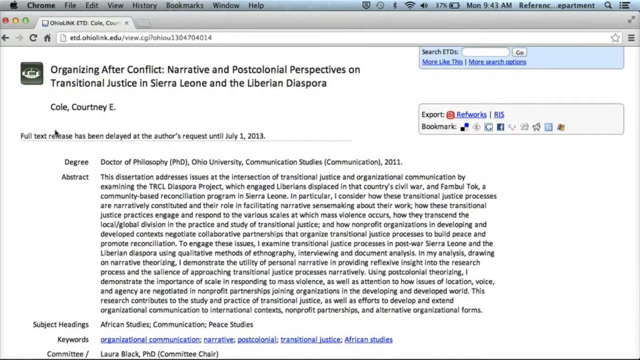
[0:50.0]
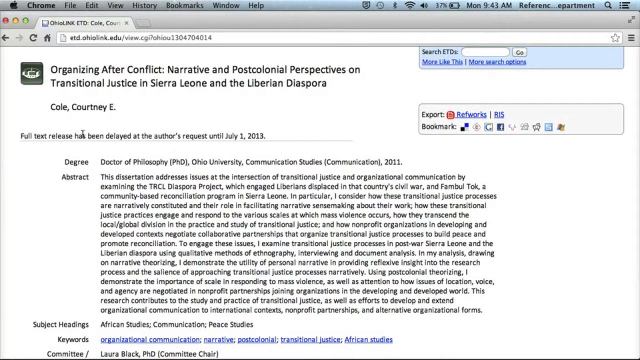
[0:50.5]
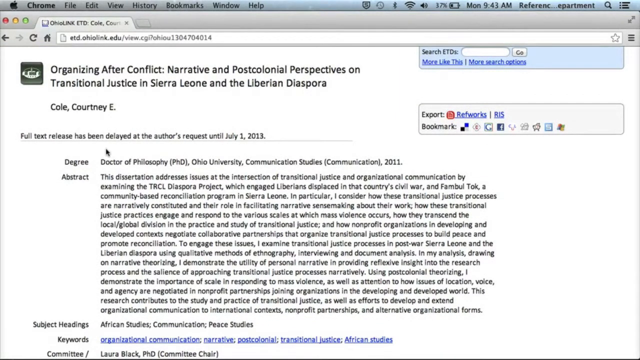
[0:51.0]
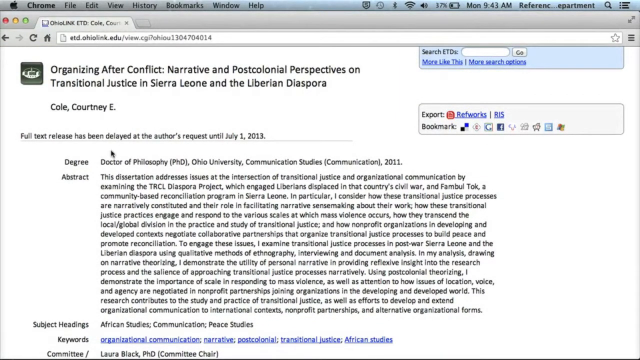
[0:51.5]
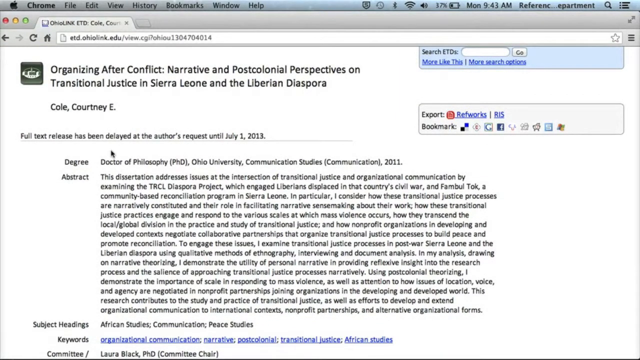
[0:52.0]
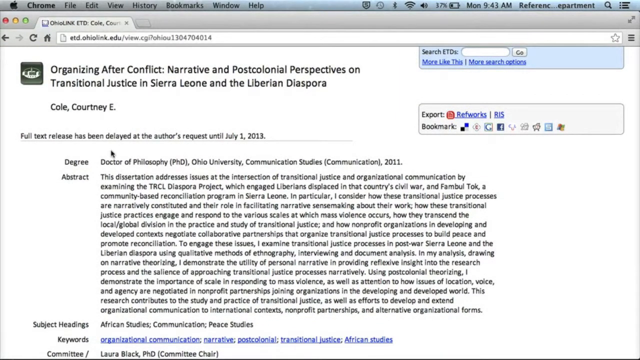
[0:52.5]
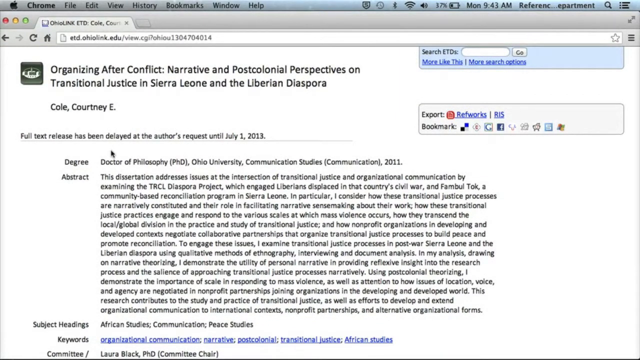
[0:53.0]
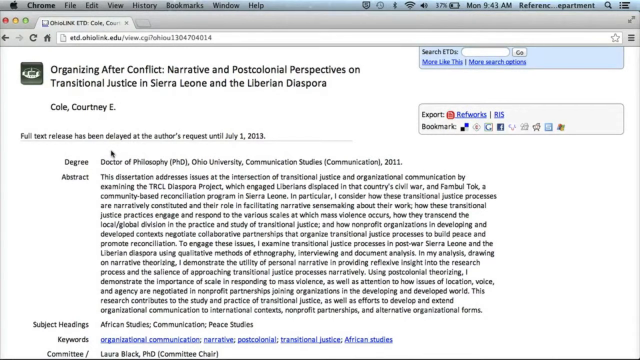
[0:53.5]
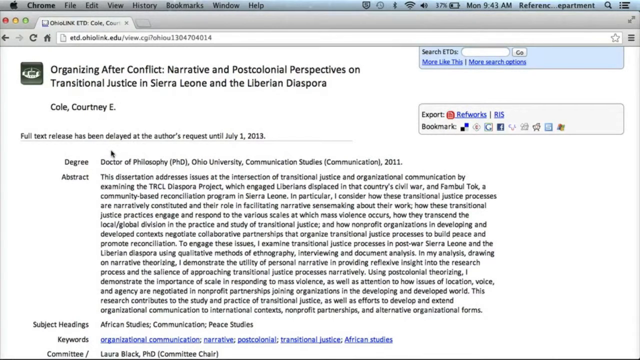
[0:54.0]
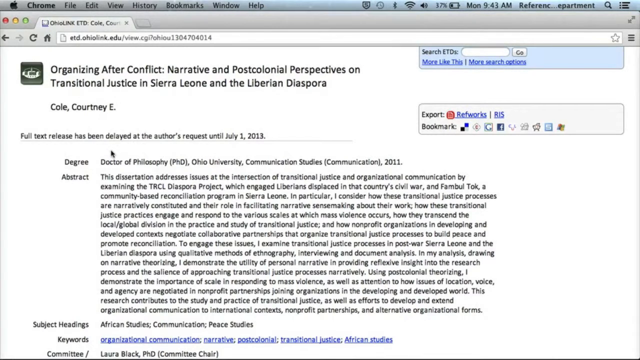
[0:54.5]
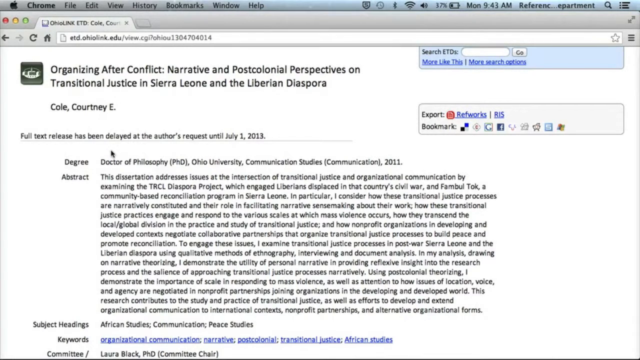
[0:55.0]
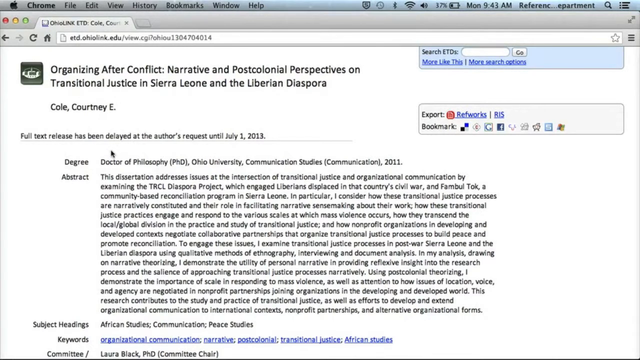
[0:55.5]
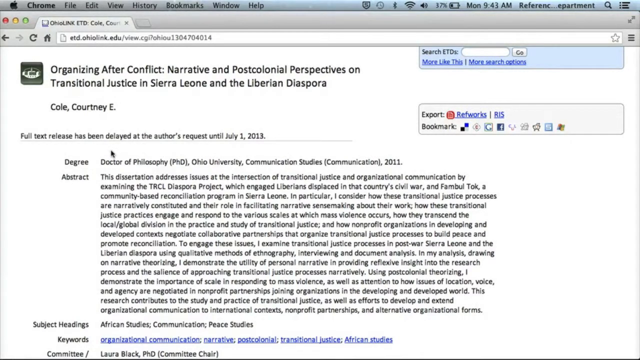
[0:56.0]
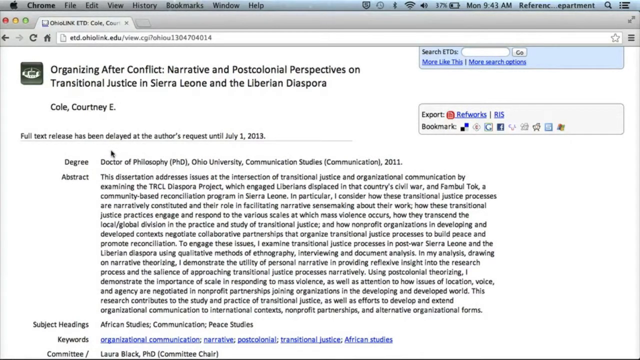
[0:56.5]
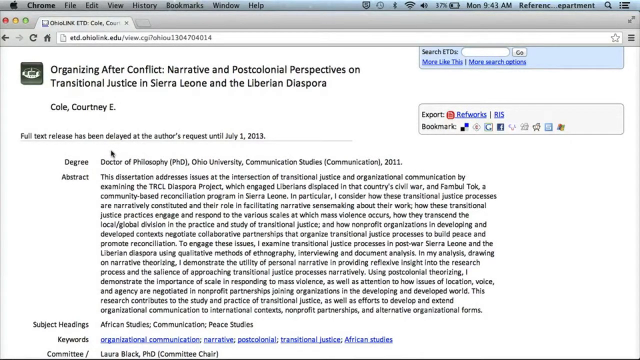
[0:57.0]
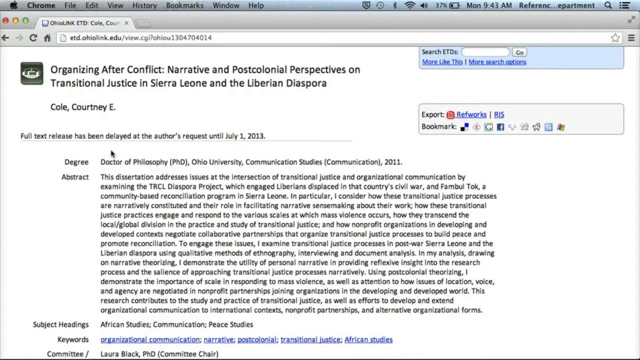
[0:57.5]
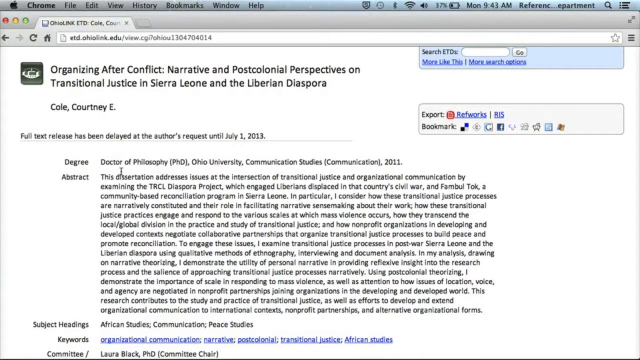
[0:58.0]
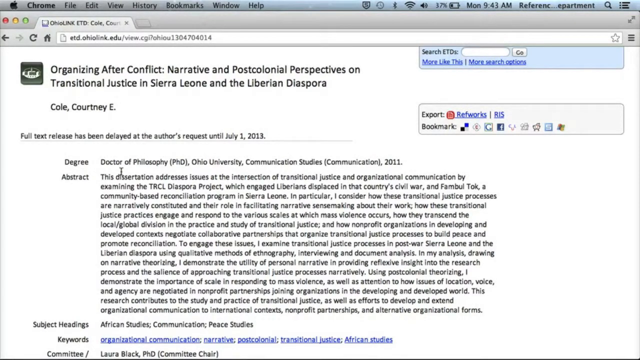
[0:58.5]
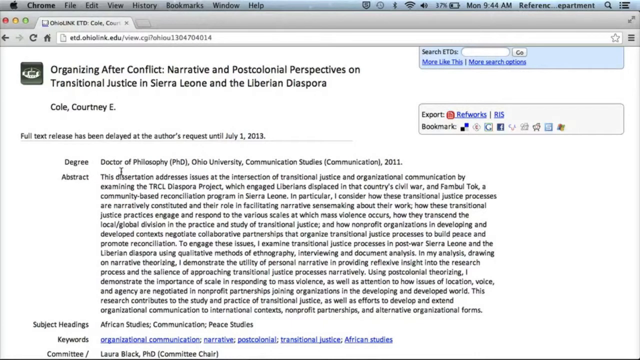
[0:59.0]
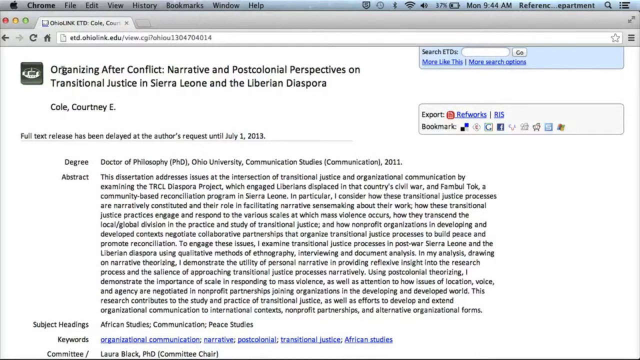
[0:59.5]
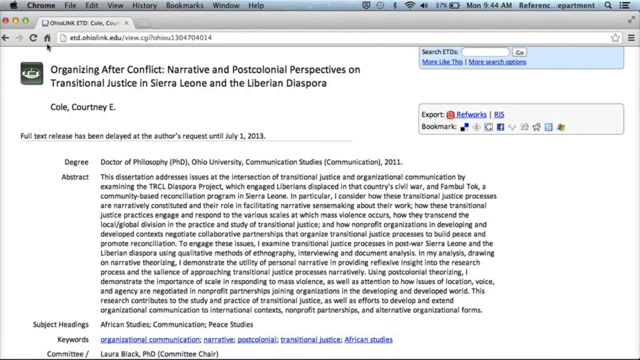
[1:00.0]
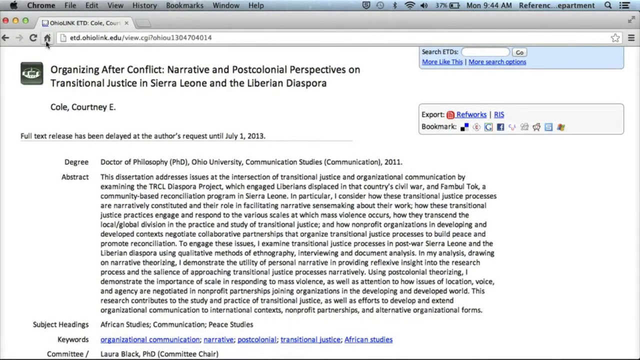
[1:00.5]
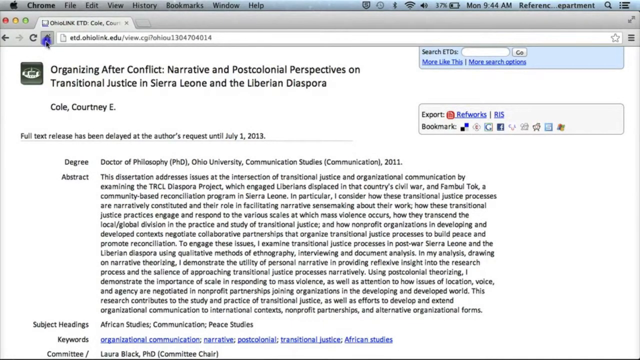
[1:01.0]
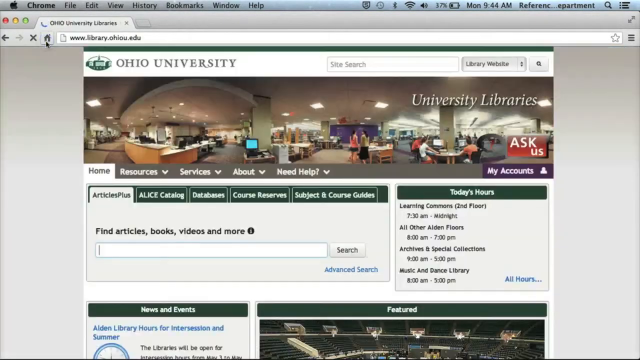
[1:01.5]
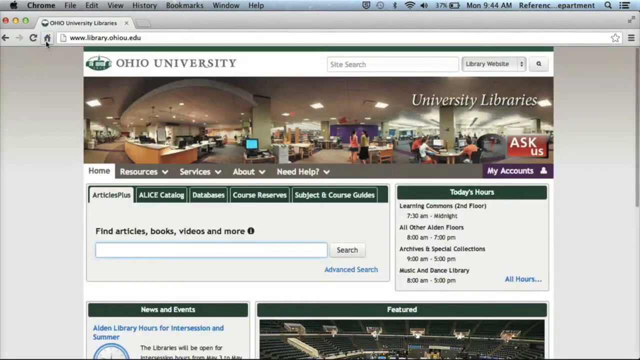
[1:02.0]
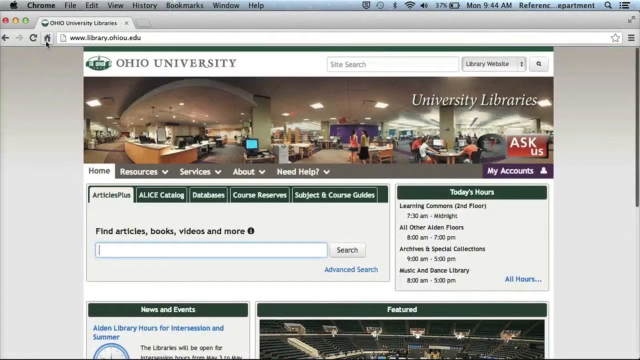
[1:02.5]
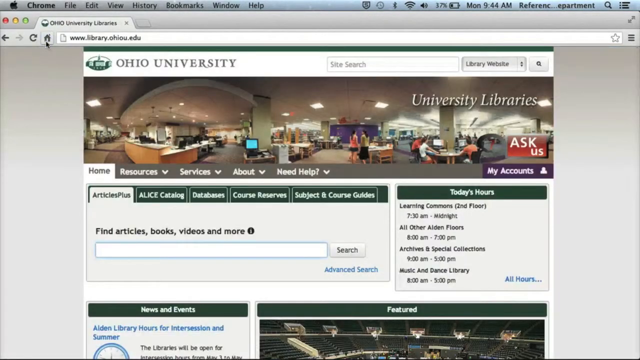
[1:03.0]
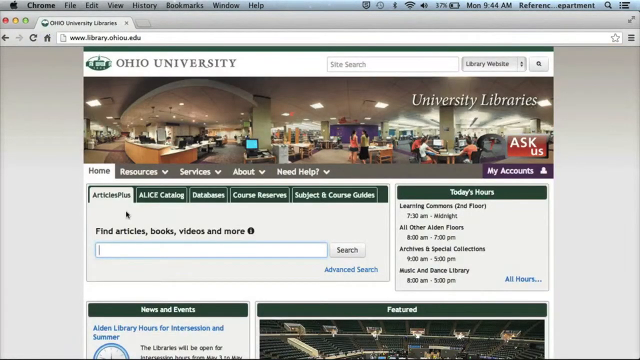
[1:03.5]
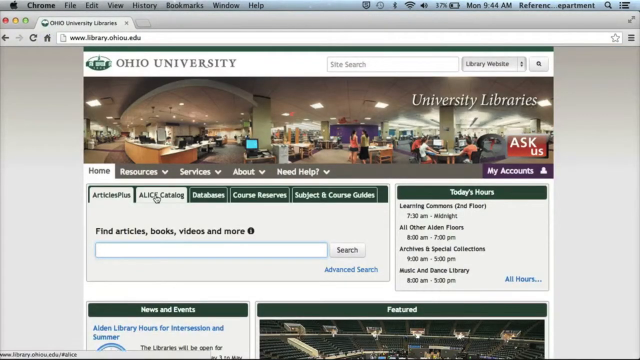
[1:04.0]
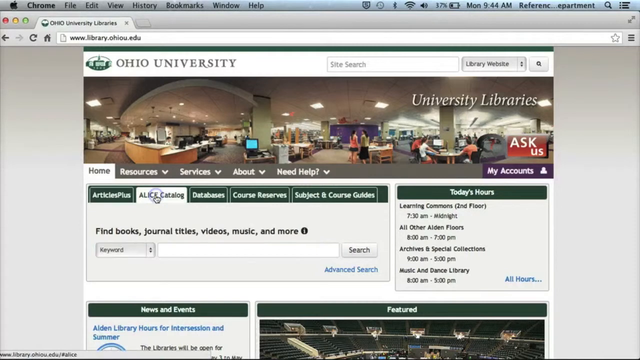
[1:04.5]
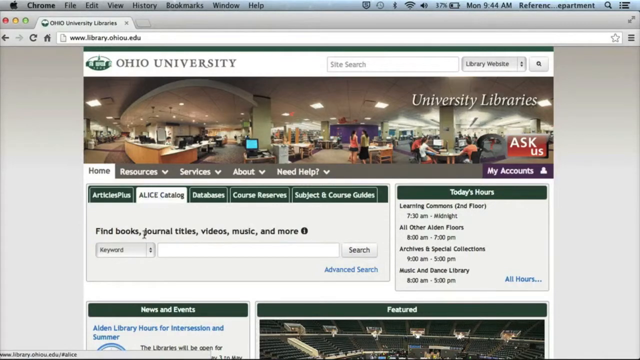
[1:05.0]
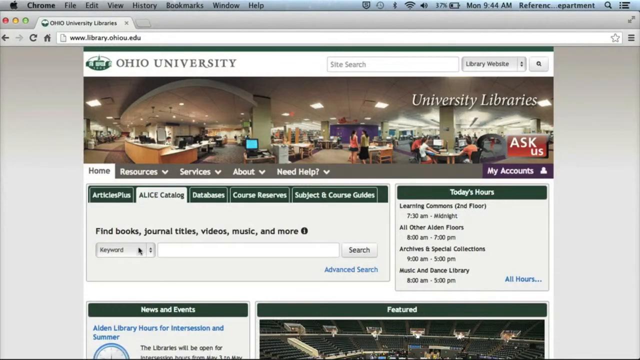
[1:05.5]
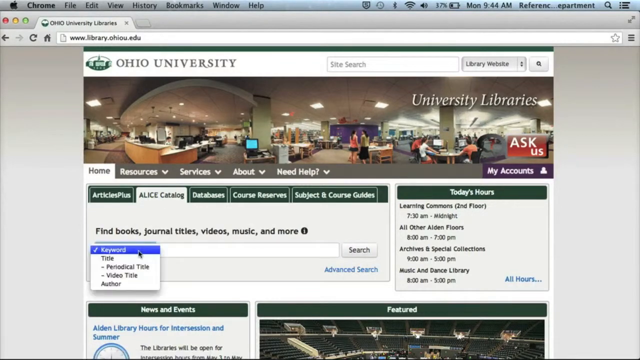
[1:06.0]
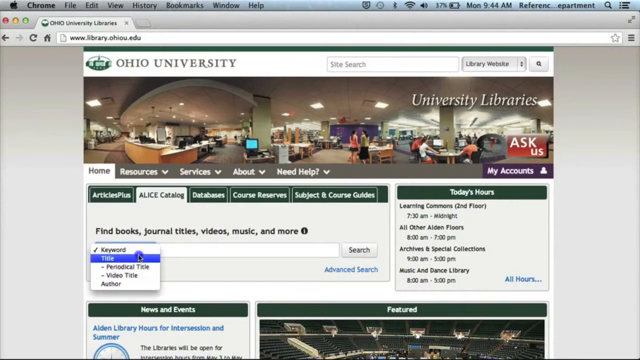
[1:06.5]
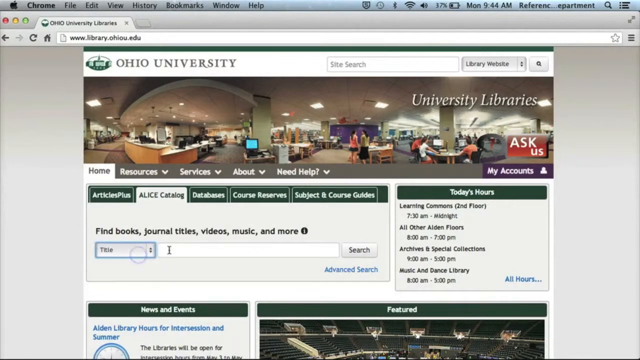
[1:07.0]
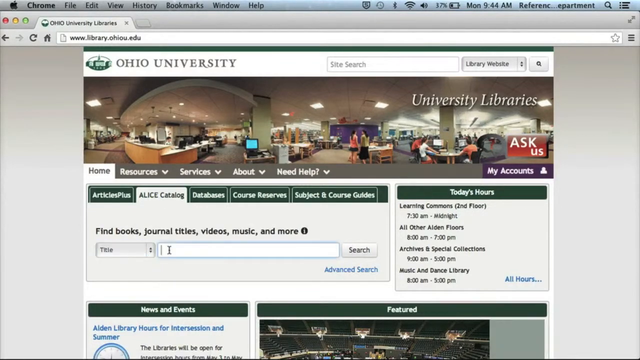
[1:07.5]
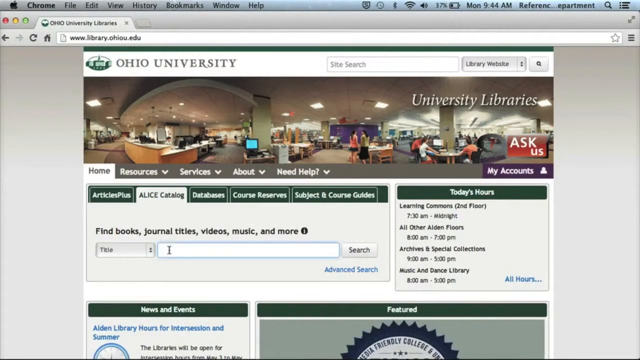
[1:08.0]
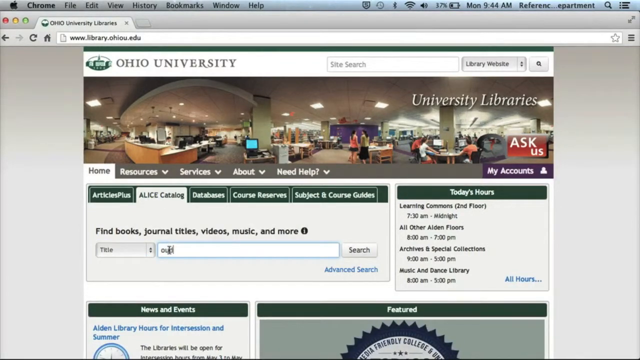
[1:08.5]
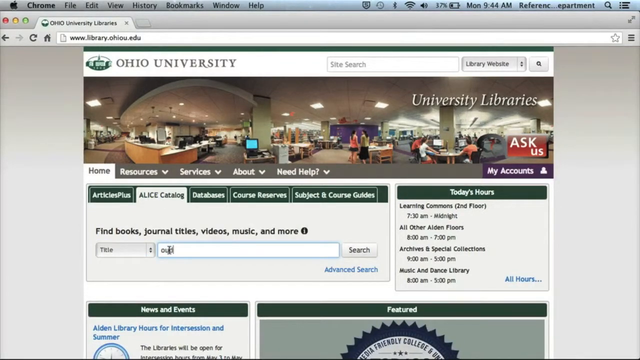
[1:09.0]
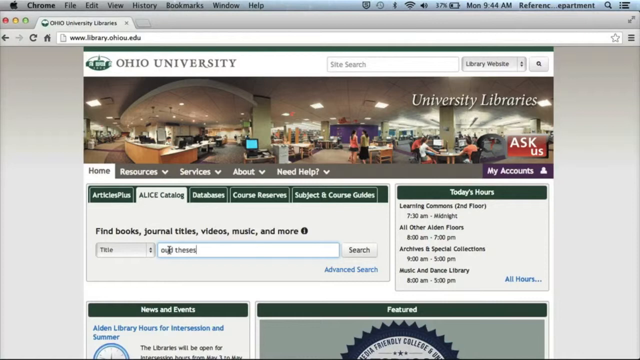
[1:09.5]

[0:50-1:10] A page shows the full text of a work of writing. The mouse cursor moves to the top toolbar and presses a button with a house icon, returning to a webpage reading "Ohio University Libraries." The green "Alice Catalog" button is clicked; it turns white and its previously white font turns green. The functions below change to read "find books, journal titles, videos, music and more." Keyword is clicked, opening a drop-down menu, and title is selected this time. The cursor moves to the search bar, clicks in it, and some letters are typed, but they are obscured by the mouse and cannot be read.